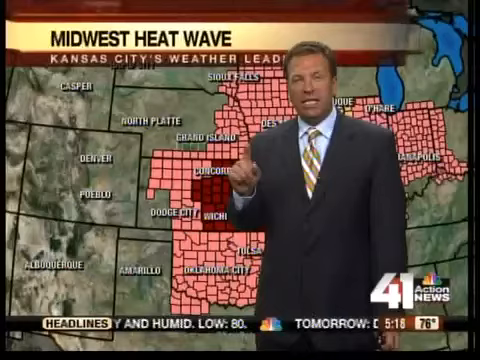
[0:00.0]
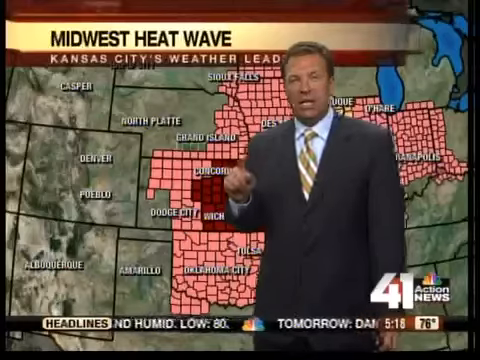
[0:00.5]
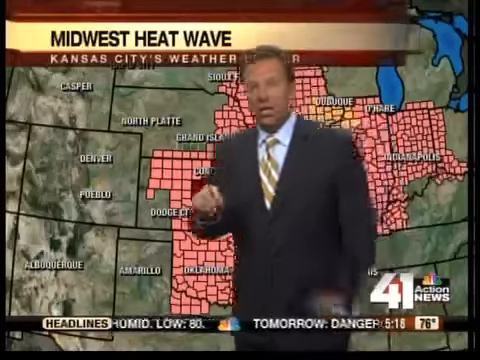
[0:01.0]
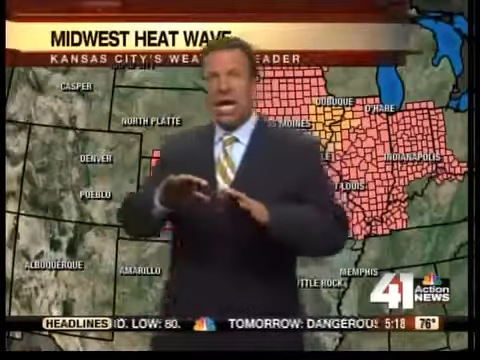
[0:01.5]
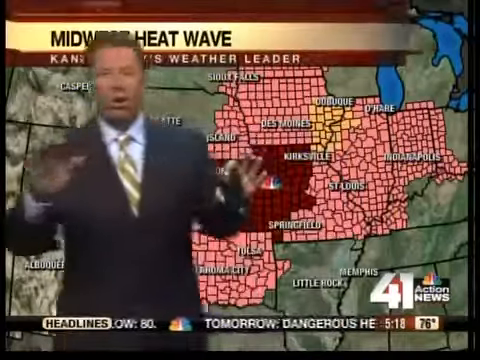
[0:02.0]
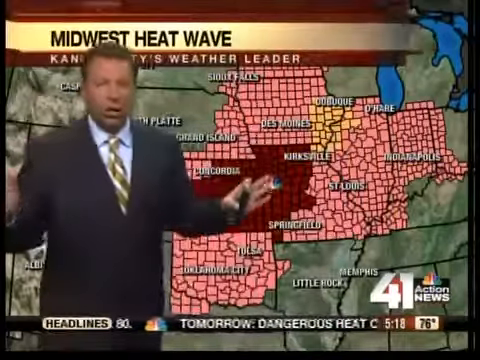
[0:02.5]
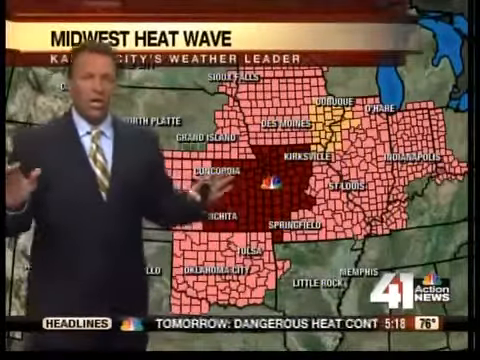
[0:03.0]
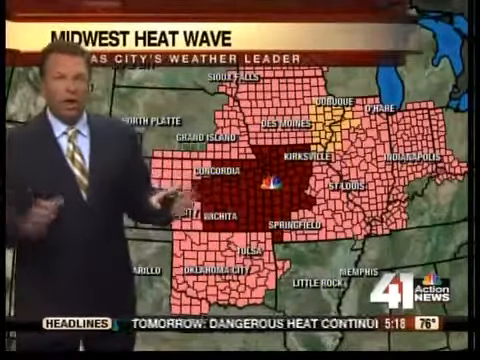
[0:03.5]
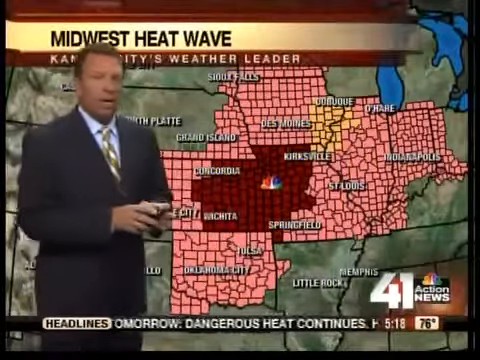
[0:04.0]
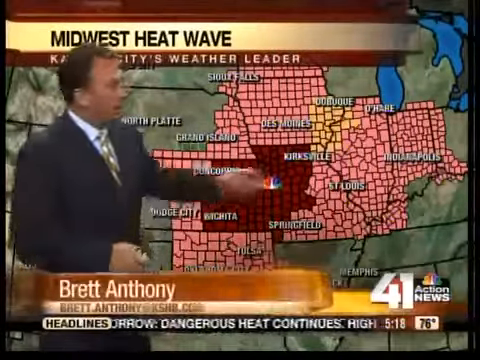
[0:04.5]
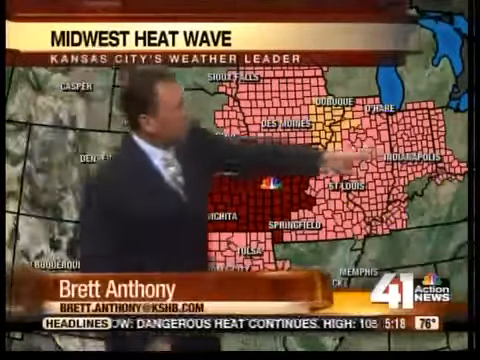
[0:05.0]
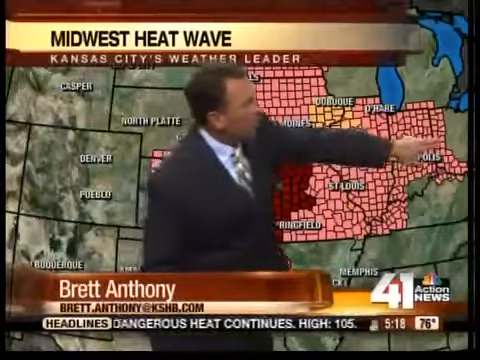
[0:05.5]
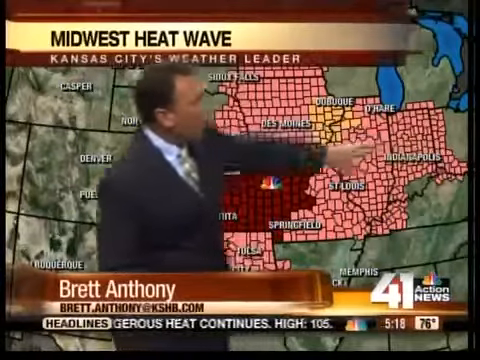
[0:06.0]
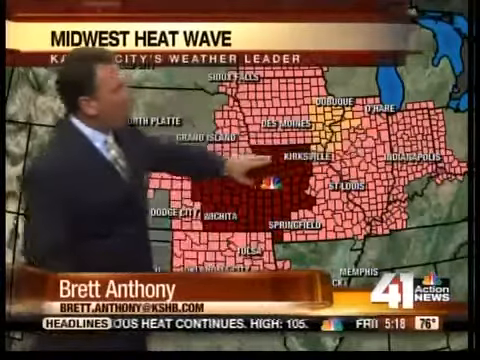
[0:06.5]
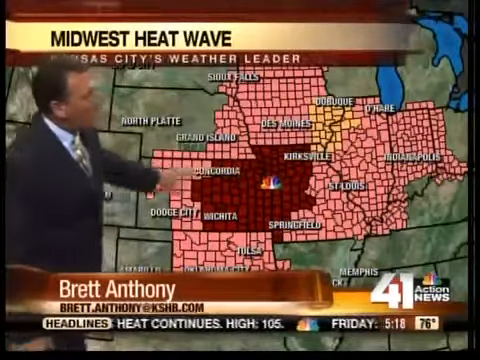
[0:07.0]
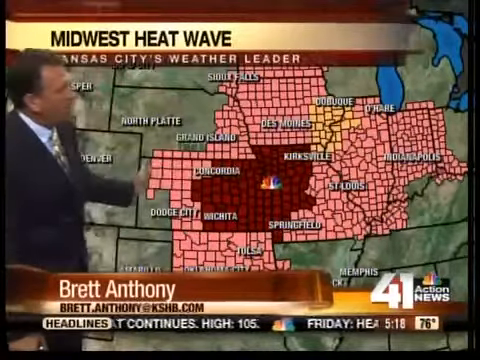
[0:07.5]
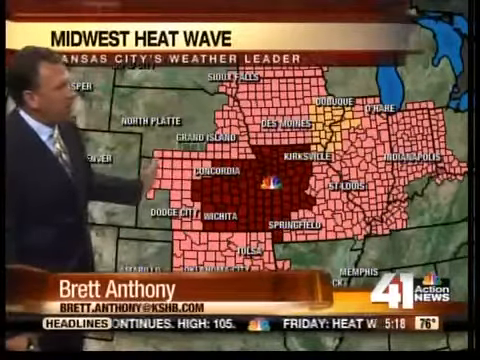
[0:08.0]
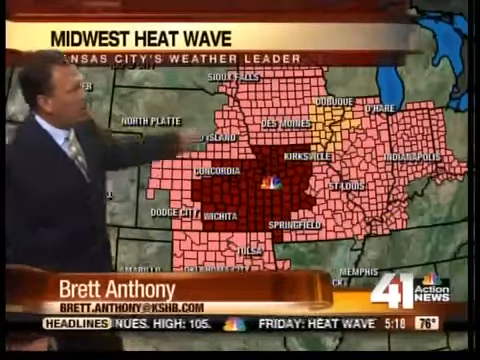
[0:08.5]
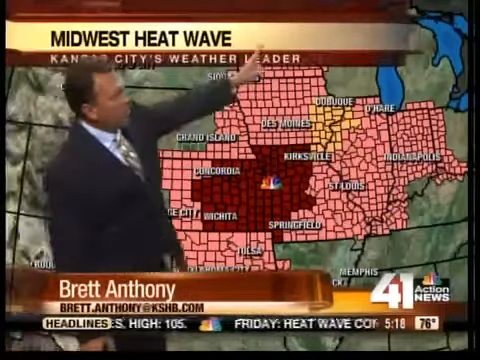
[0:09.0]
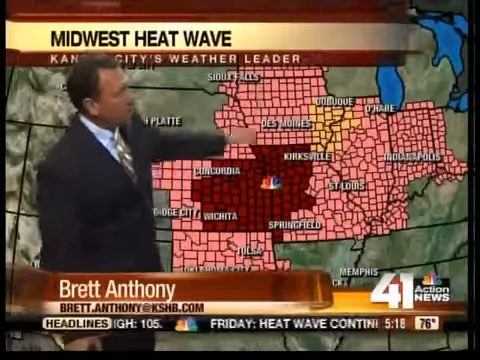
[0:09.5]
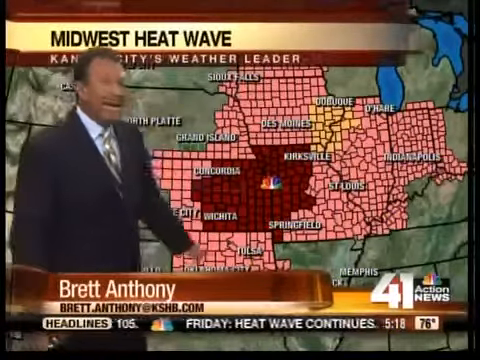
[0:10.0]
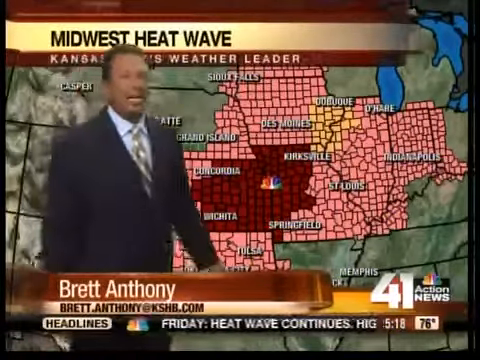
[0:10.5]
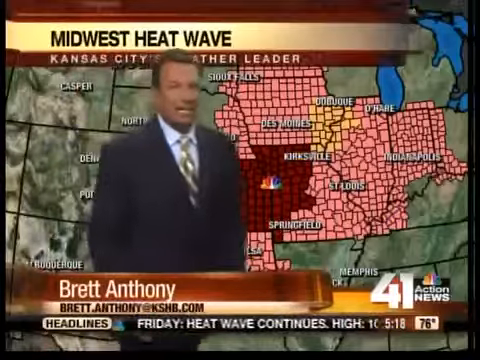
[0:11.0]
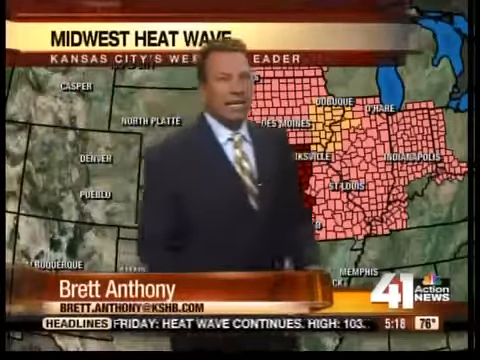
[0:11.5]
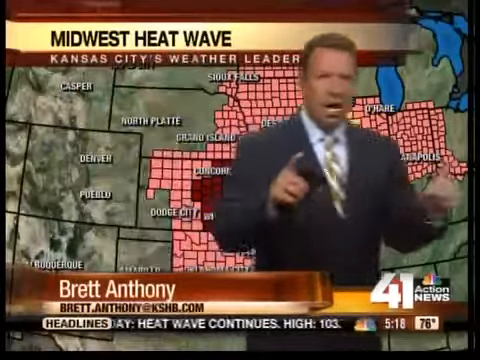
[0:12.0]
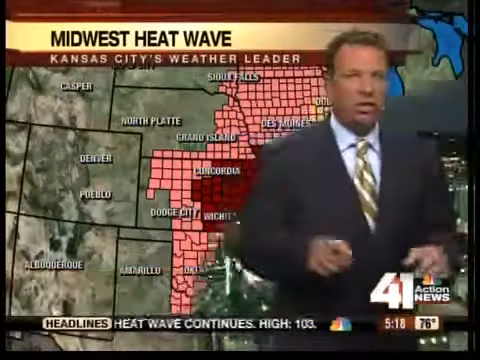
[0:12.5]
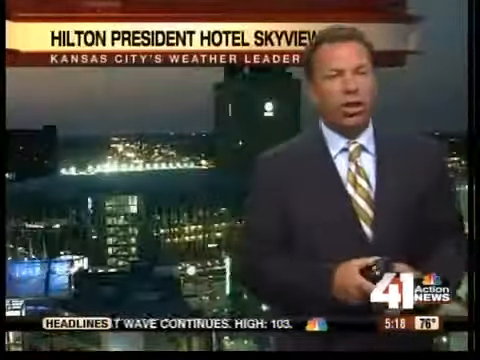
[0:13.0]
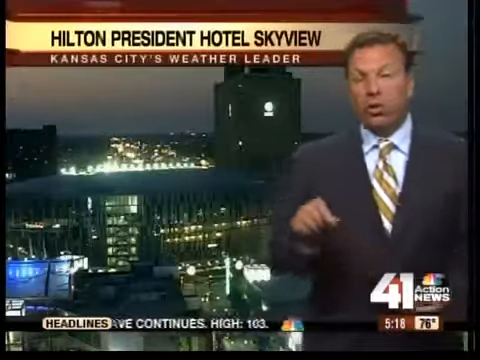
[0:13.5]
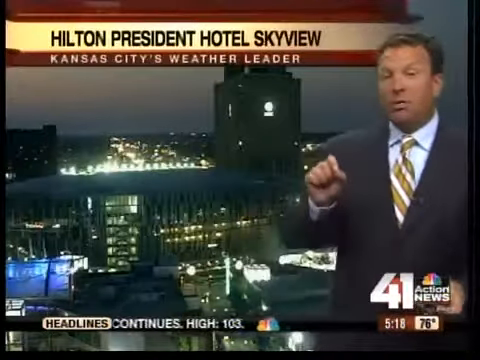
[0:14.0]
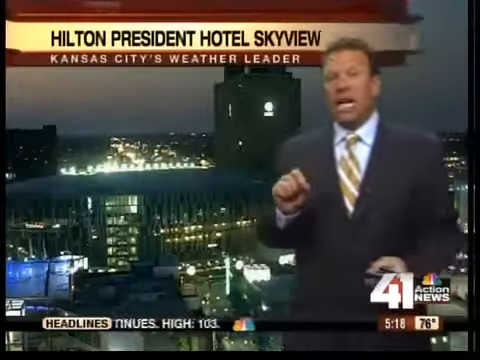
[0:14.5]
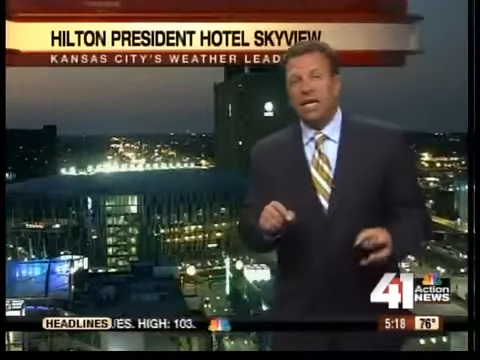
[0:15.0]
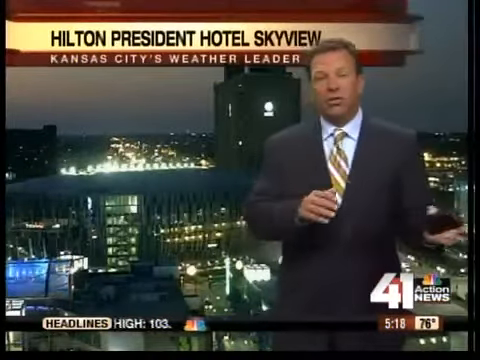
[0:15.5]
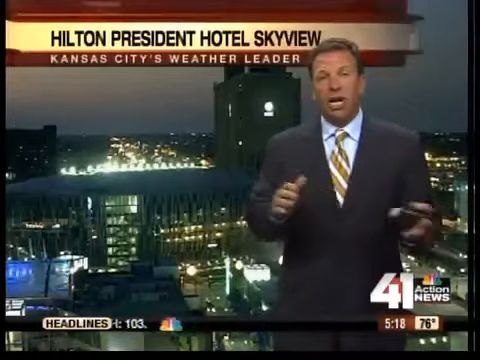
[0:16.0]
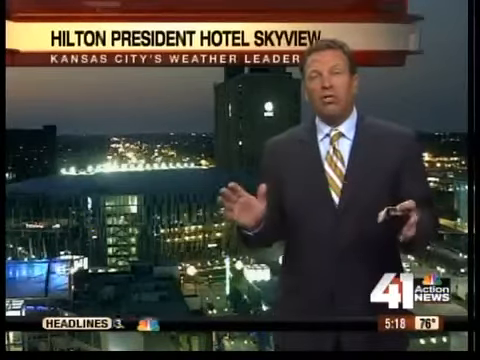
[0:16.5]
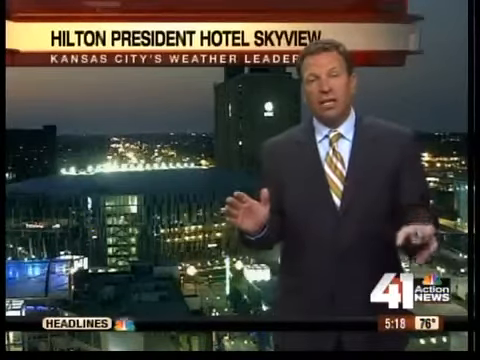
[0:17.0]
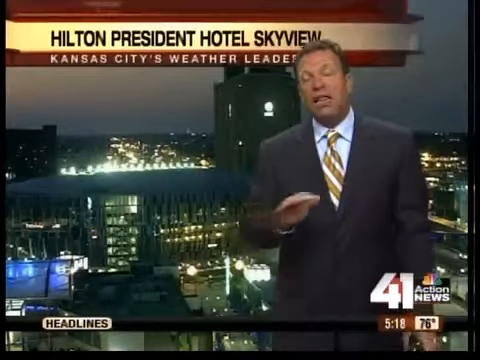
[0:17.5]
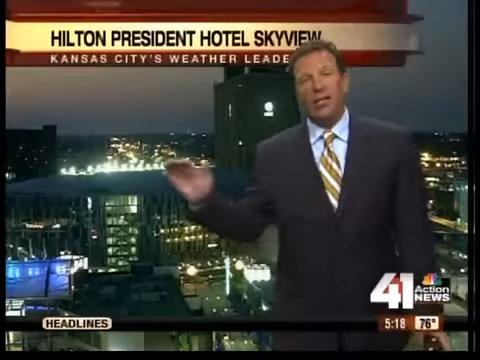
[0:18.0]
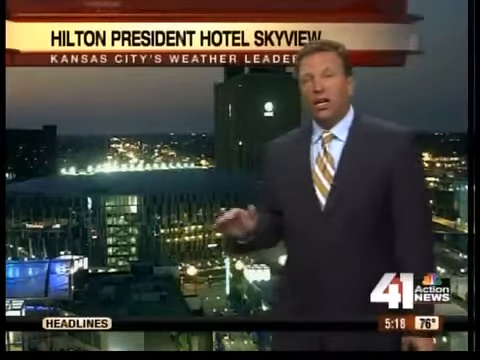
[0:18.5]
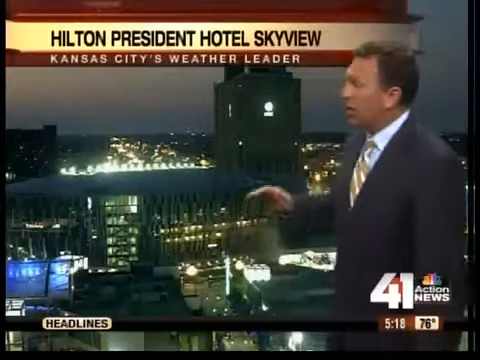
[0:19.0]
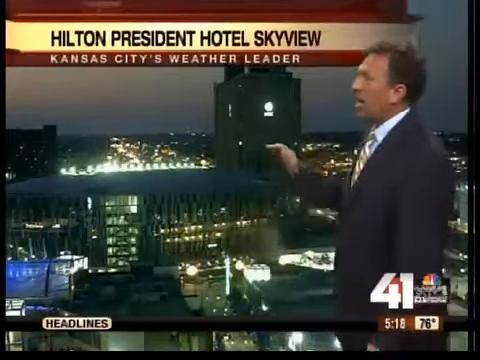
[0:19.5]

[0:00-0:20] What appears to be some kind of weather report is on screen, with "41 action news" at the bottom right. On the right side of the screen is what looks like a weather reporter standing, wearing a gray suit with a blue shirt underneath and a white and yellow striped tie. He gestures toward the camera, pointing a finger with his right hand, points the finger down a bit, and then moves from the right side of the screen over to the left. While doing this, he separates his hands apart, almost as if something exploded. He then stands on the left side of the screen and with his left hand points to the right side of the screen, which seems to show Indianapolis. He moves his hand from right to left, almost as if it is against the screen, seemingly pointing out a path that some kind of weather is taking. He then gestures toward the top of the screen, pointing to what looks like the Des Moines area. Text at the top of the screen reads "Midwest heat wave, Kansas City weather leader." The areas he points out are pink or red. The video then moves to another screen with the same man standing on the right side, and this time he walks over to the right side.